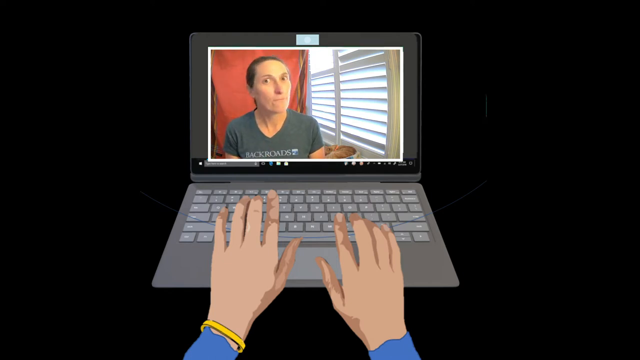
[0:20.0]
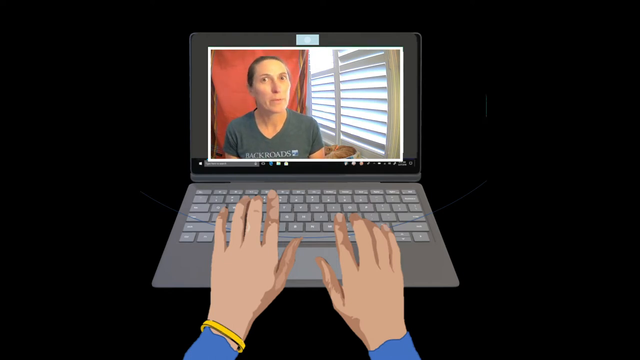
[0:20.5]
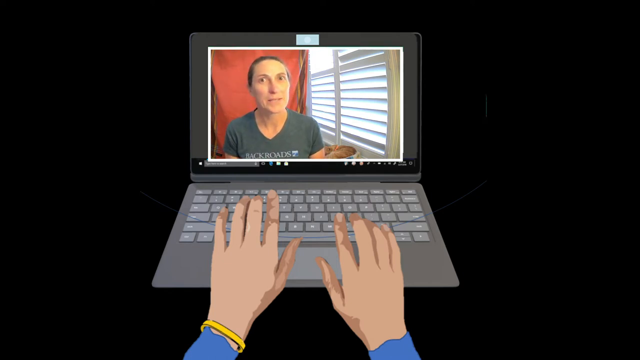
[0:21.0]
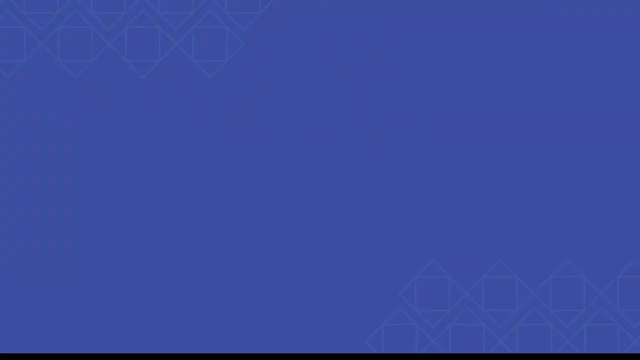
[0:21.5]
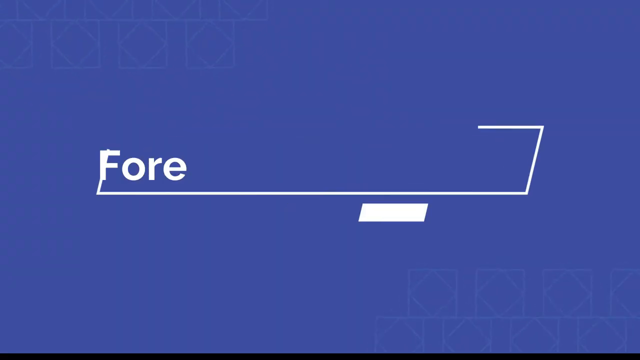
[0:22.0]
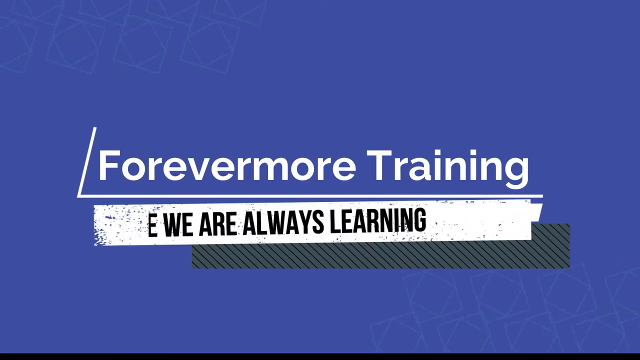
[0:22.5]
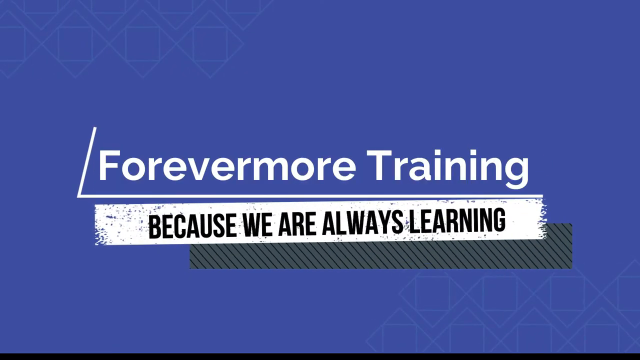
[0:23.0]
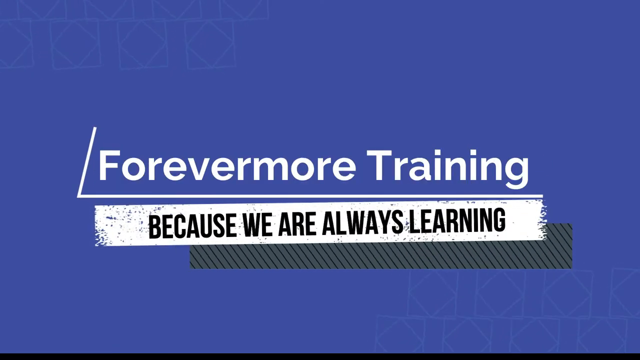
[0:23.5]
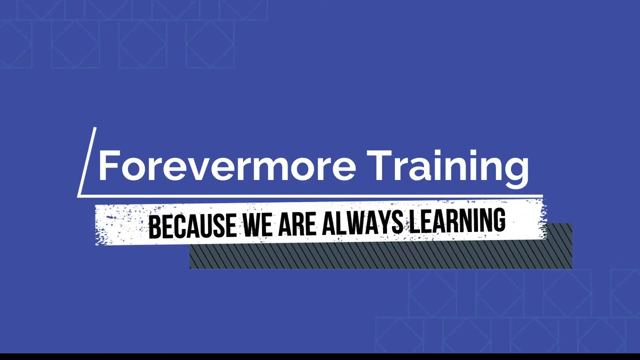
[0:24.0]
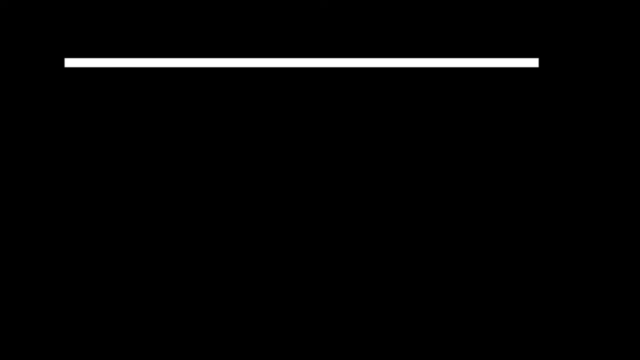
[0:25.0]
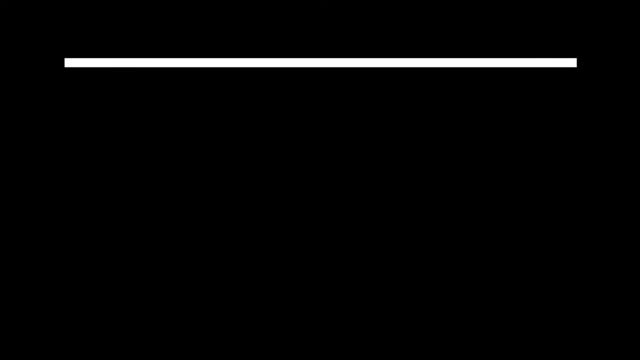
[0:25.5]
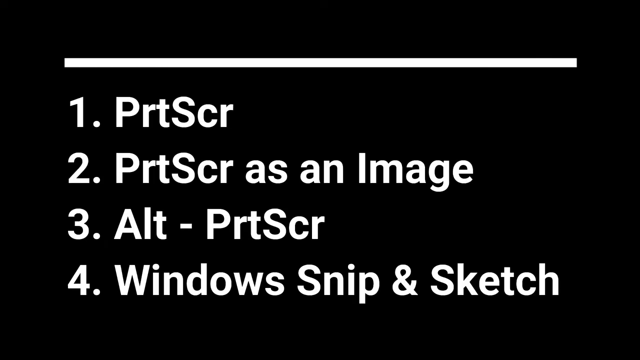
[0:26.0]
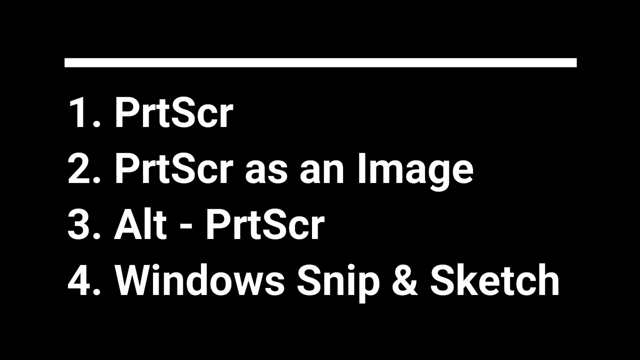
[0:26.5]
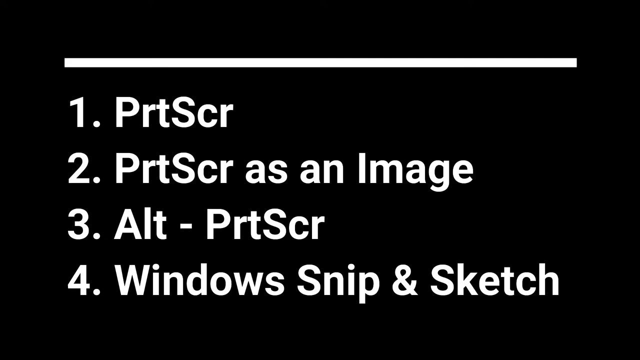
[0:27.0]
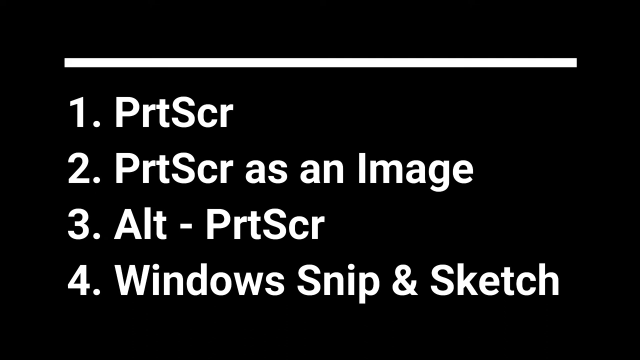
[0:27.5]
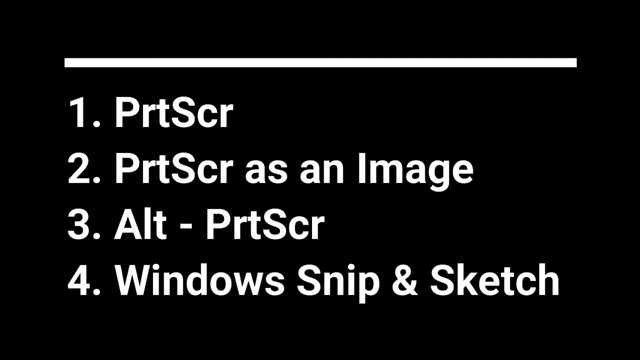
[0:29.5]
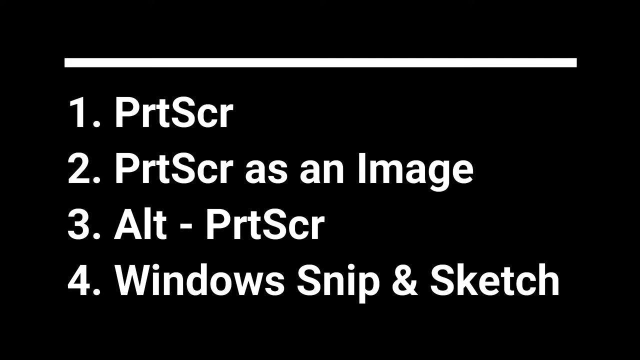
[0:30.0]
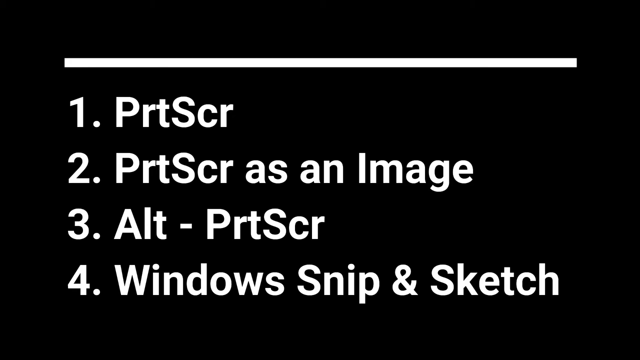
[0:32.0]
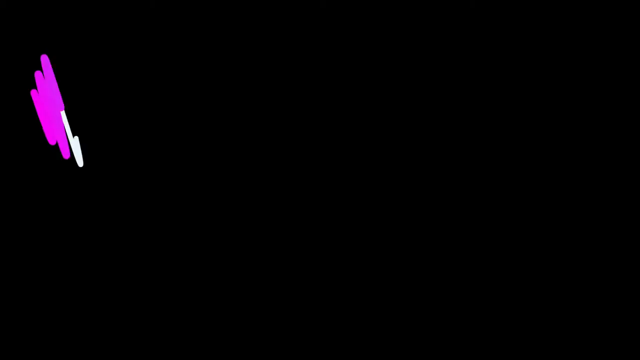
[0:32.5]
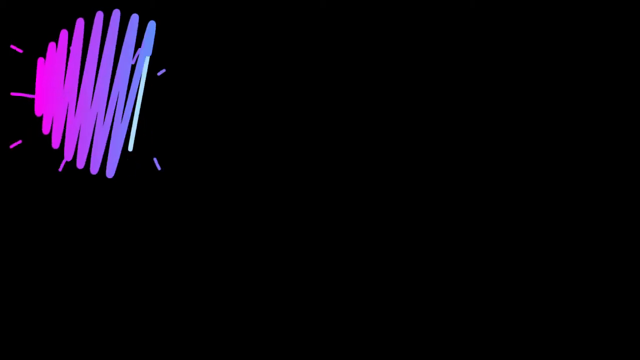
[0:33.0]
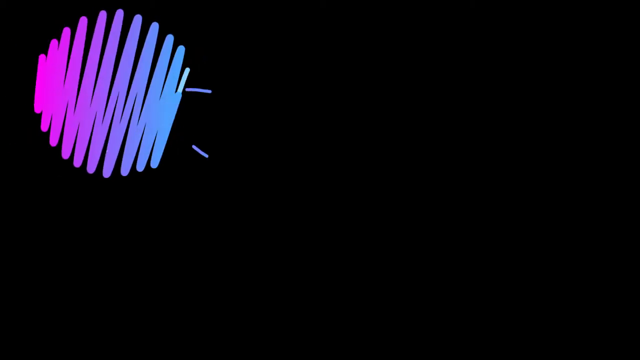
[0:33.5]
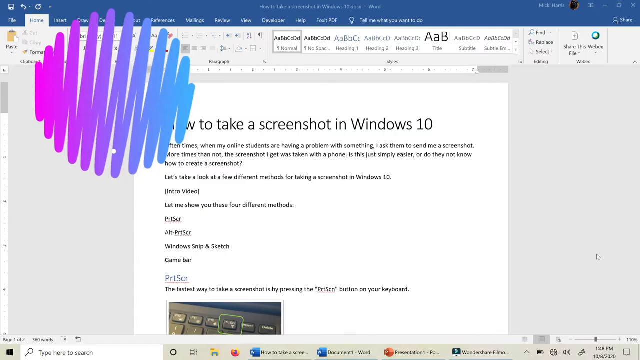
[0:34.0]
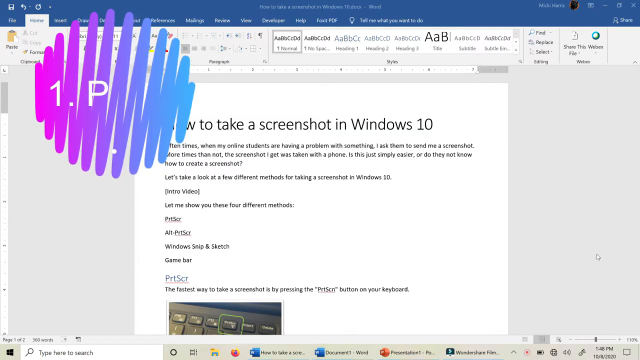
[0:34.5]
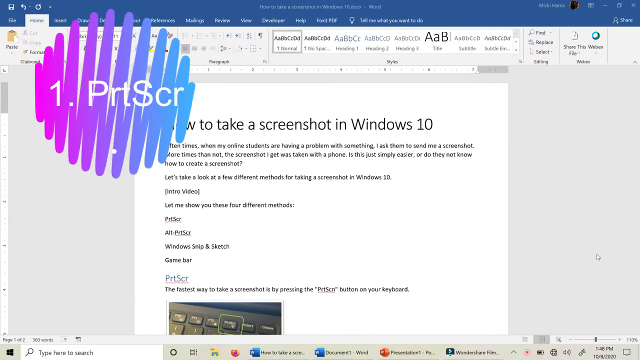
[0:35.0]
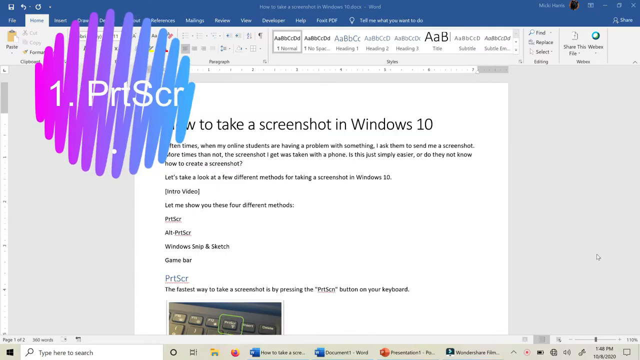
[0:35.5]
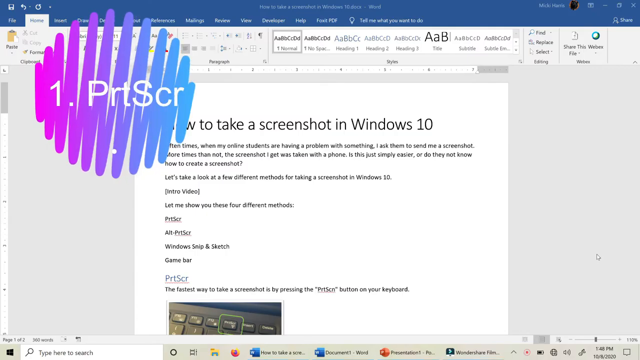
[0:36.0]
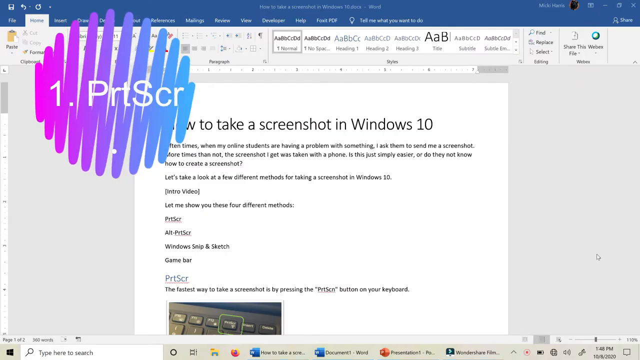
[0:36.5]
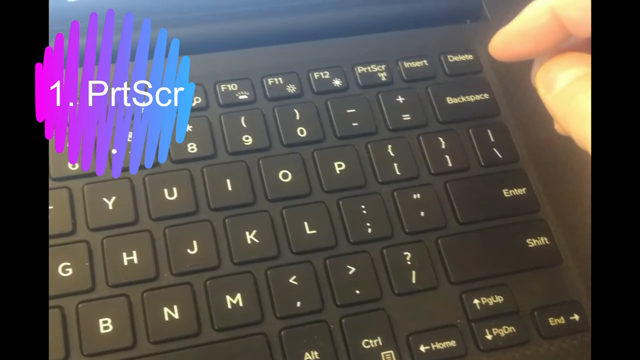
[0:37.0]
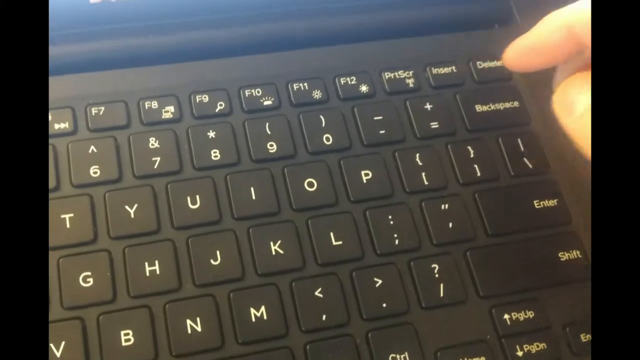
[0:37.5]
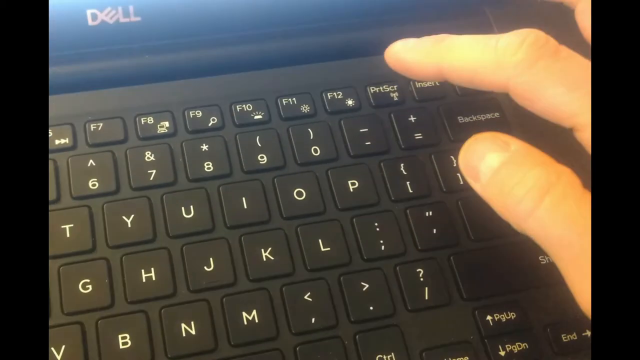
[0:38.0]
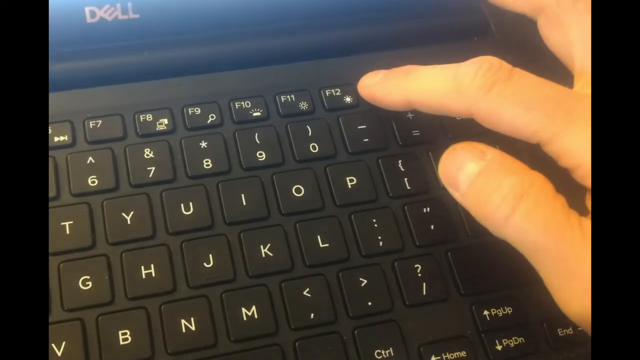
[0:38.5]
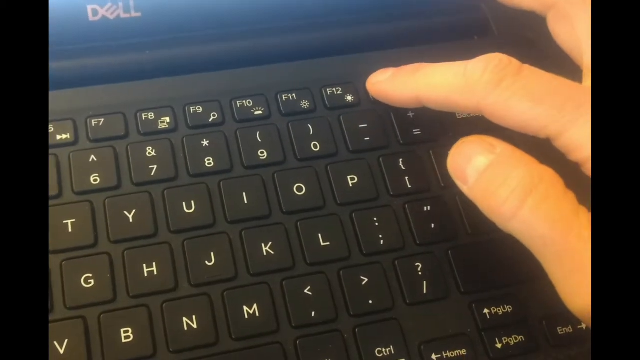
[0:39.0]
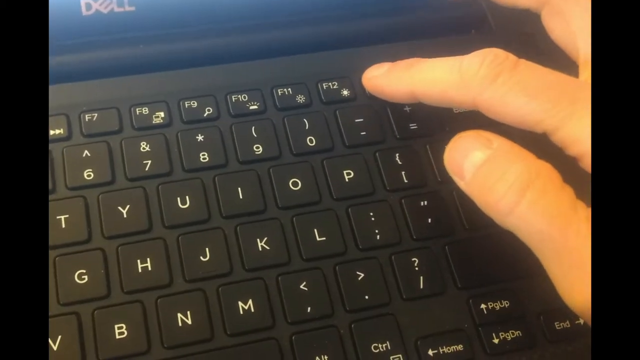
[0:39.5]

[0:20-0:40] Against a black background there is the silver digital computer, with hands that look like they are typing and appear Caucasian, and the woman is speaking. That goes away, and a blue screen reads "forever more training because we are always learning." Next comes a black screen with a thick line at the top and a numbered list in all-white font: number one "PRT SCR", then "PRT SCR as an image", number three "alt-PRT SCR", and number four "Windows snip and sketch". A Word document follows, reading "how to take a screenshot in Windows 10" and giving directions. Then a circle made of what look like squiggly lines, purple and blue, appears with "1 PRTSC" written inside it. A recording of a keyboard follows, with a hand acting as if it is typing.